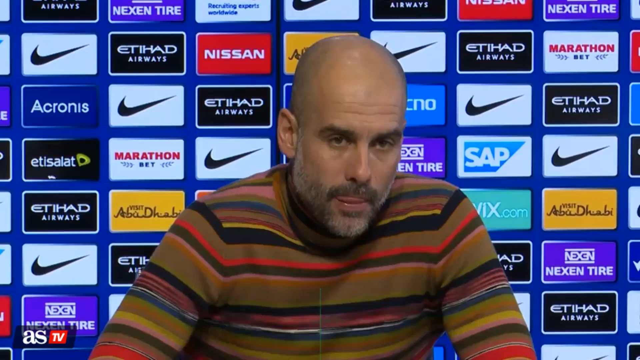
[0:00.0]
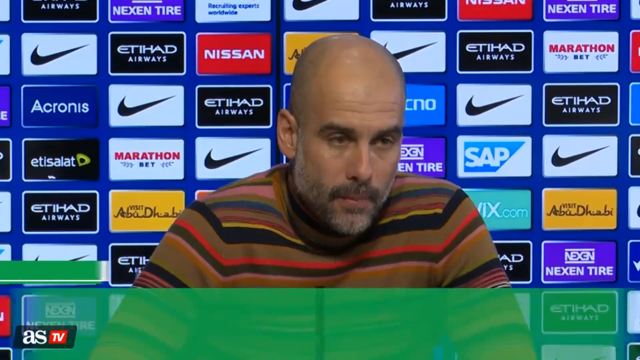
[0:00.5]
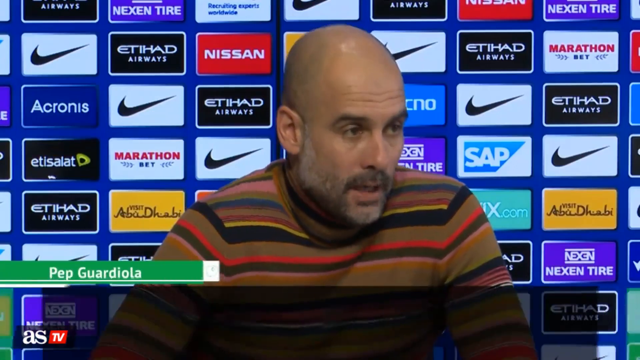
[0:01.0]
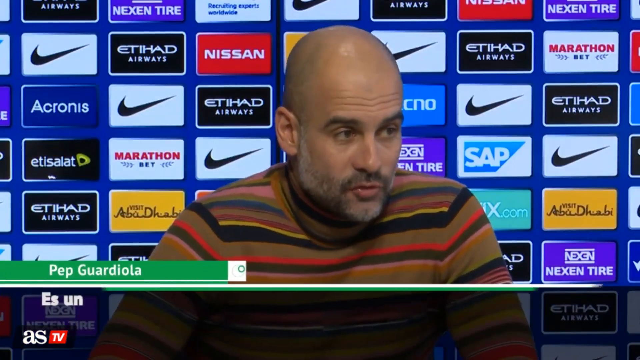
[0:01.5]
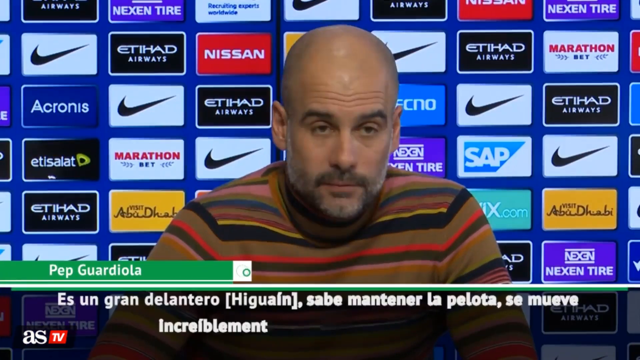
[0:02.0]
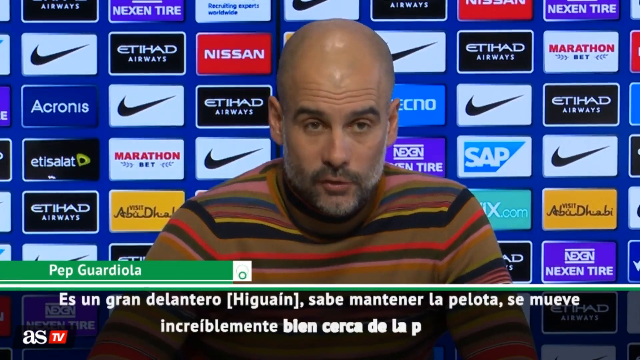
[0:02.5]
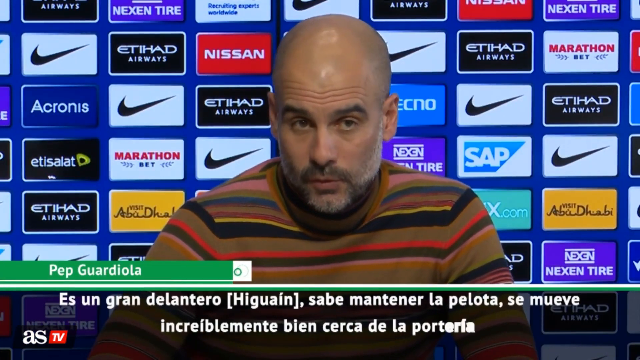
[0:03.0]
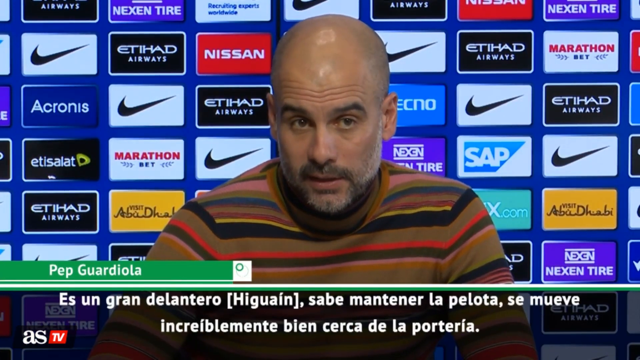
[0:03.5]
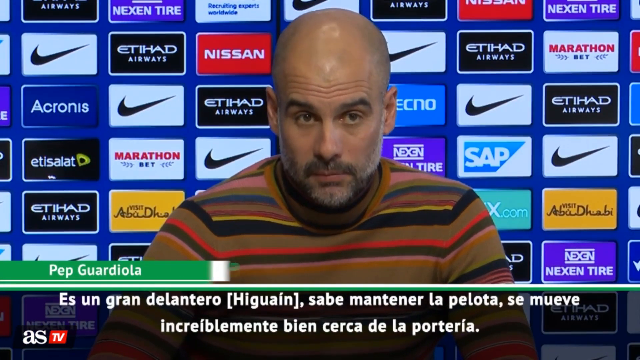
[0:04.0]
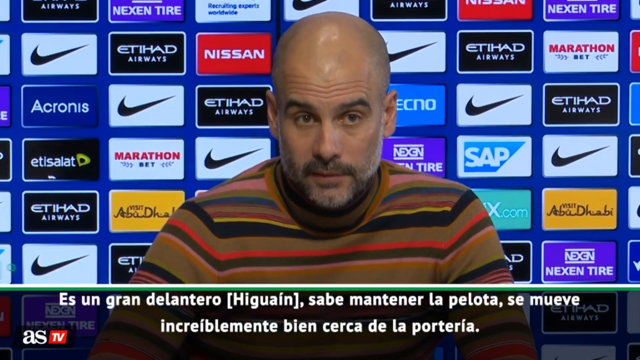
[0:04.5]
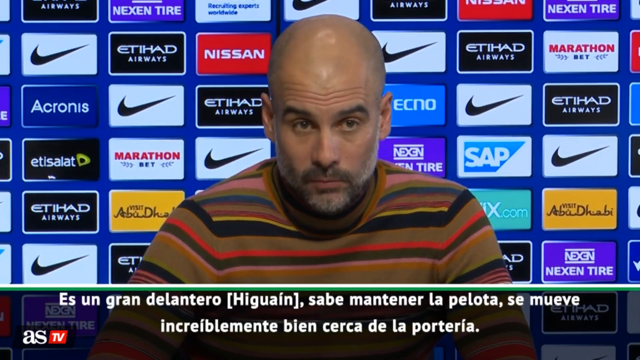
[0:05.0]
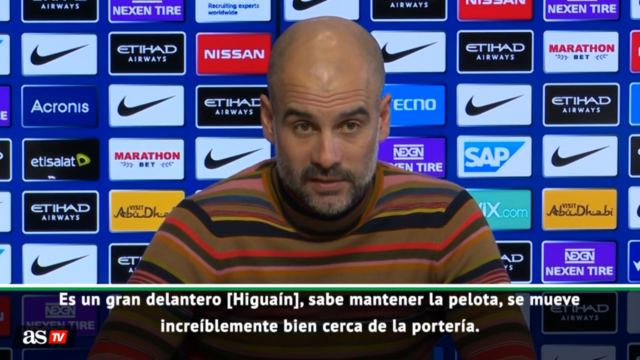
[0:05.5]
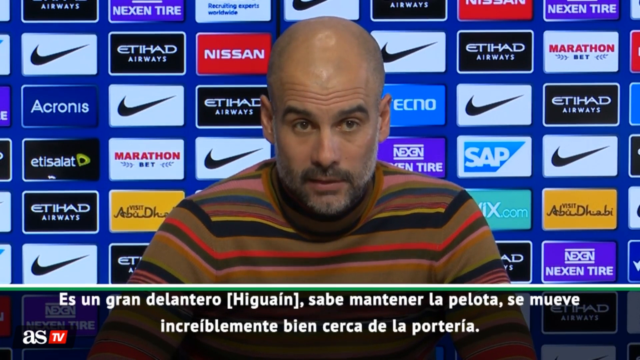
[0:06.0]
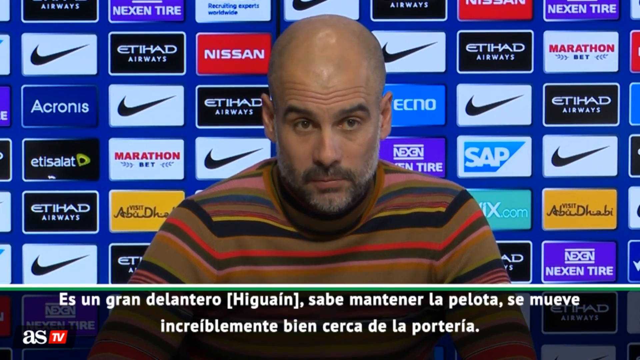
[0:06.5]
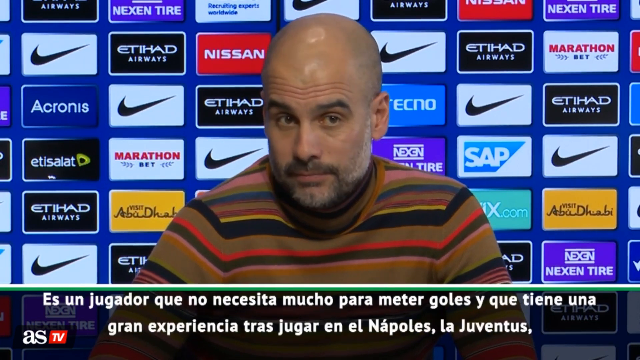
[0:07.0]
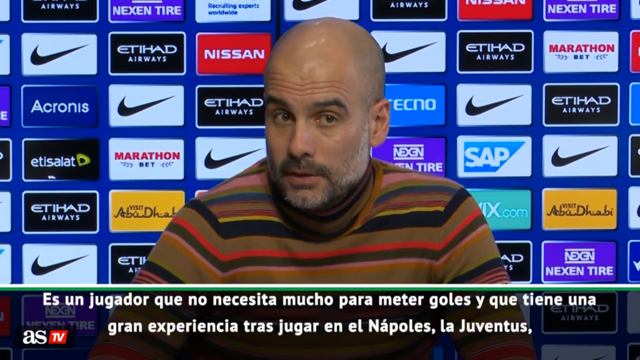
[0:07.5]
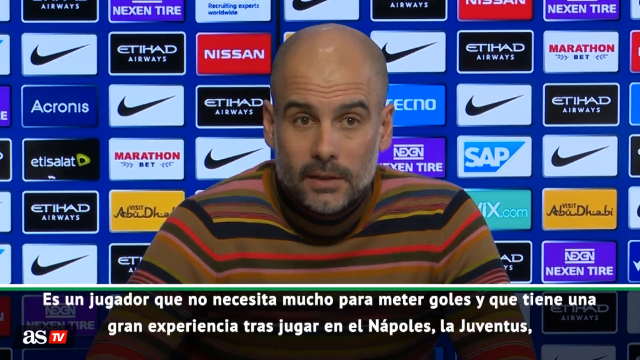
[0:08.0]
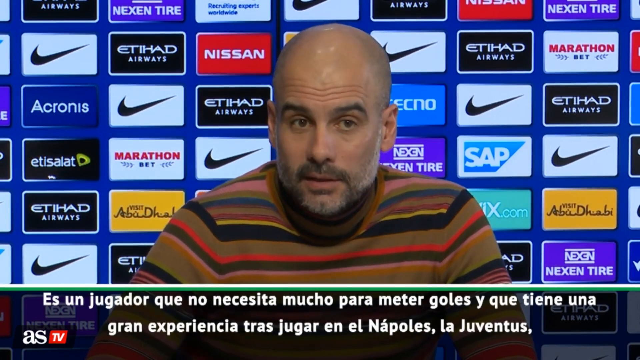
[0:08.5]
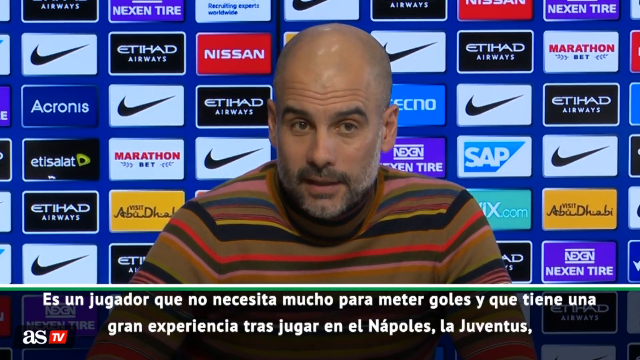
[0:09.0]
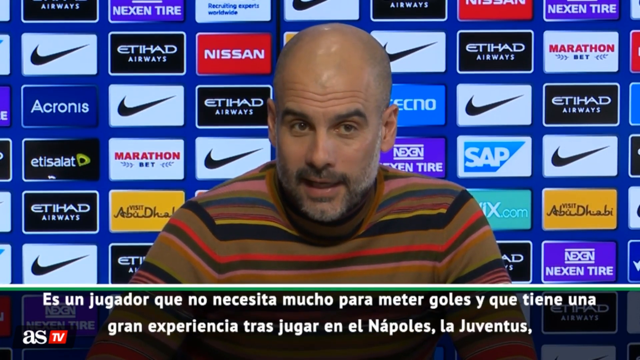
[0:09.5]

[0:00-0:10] A man sits in front of a bunch of logos, or sponsors, including Nike, SAP, Marathon, E-T-I-S-A-L-A-T, Acronis, Etihad and Nissan. He is bald, has a goatee, and looks like Nikita Kolof, a former pro wrestler. His shirt looks almost like it is from the 70s, an old-style shirt with all kinds of colors: red, black, green, yellow and blue. More logos appear, including Nexen Tire. The man, Pep Guardiola, speaks to the camera. The on-screen writing is in a different language, possibly Mexican, though this is not certain.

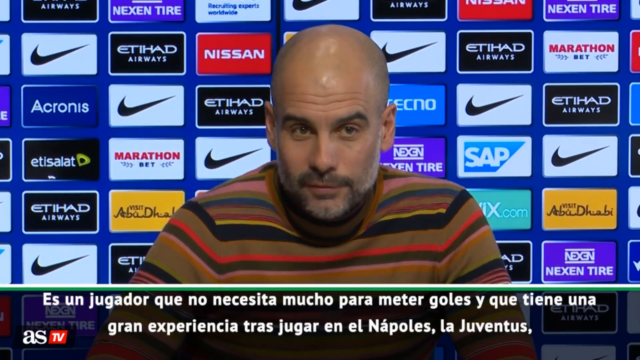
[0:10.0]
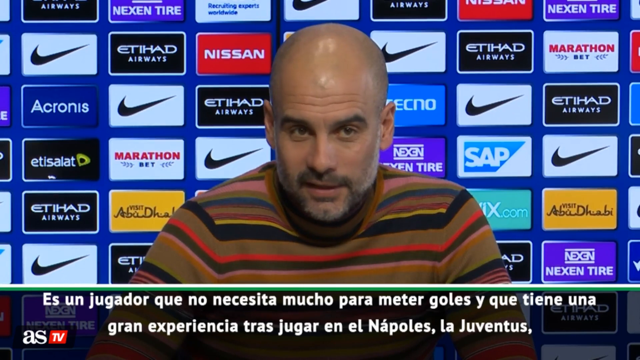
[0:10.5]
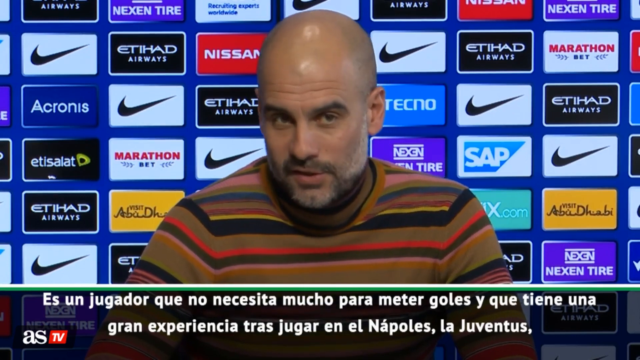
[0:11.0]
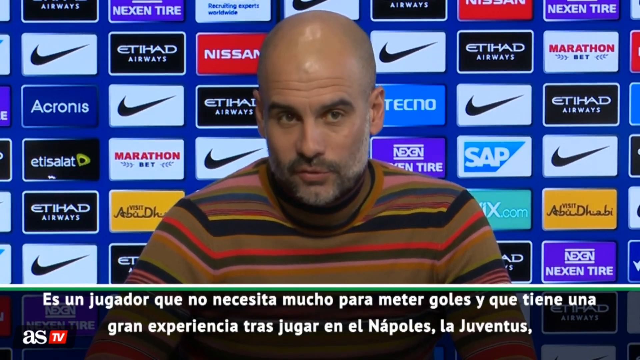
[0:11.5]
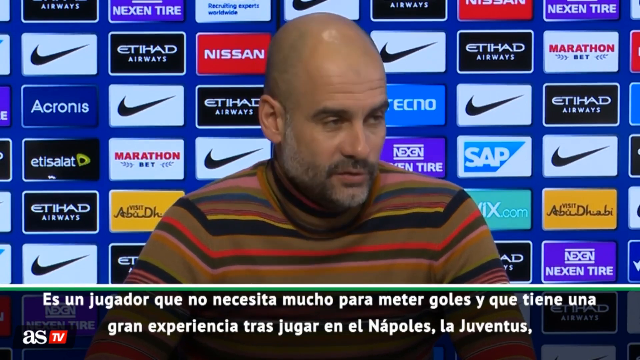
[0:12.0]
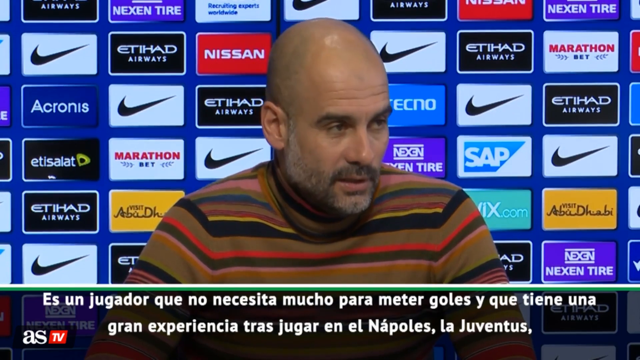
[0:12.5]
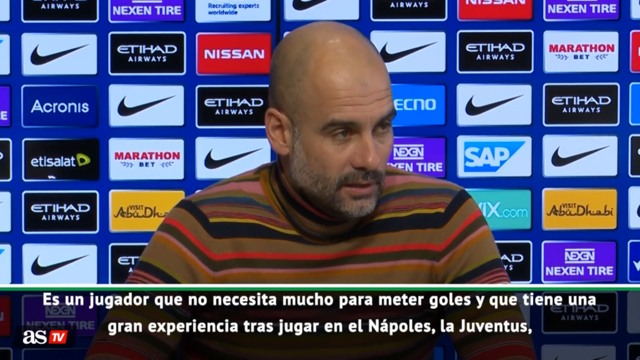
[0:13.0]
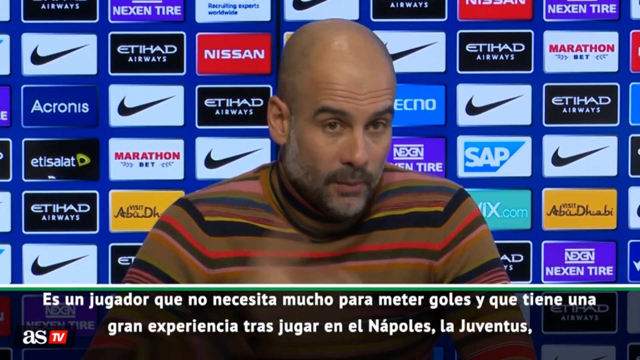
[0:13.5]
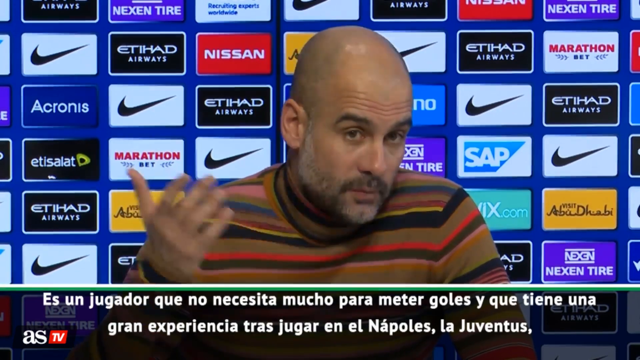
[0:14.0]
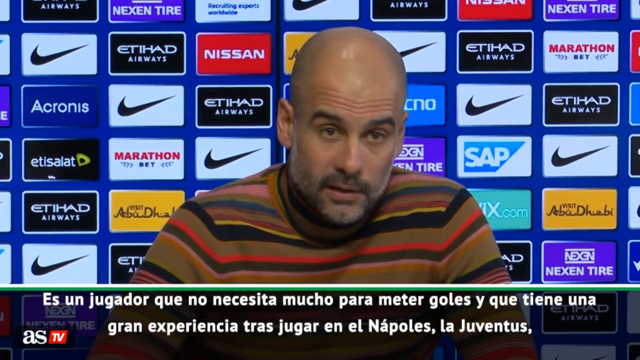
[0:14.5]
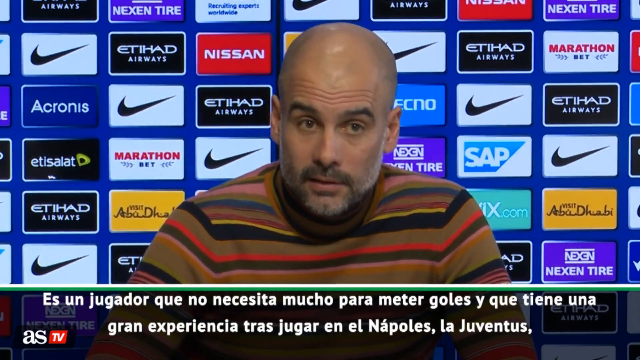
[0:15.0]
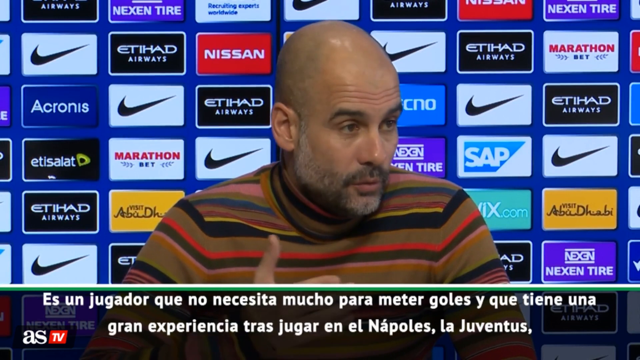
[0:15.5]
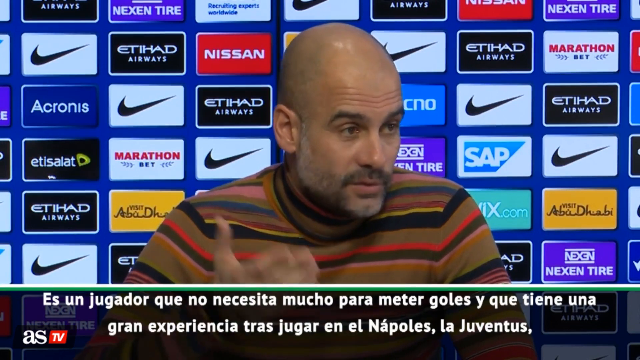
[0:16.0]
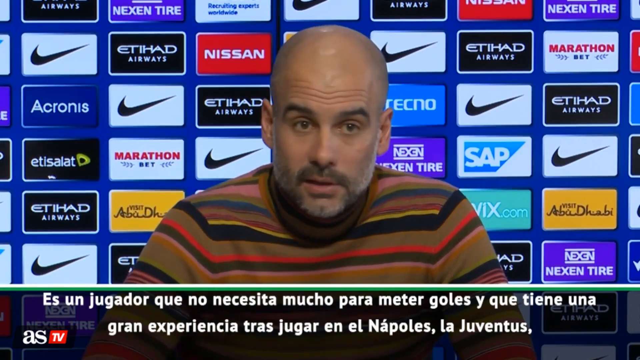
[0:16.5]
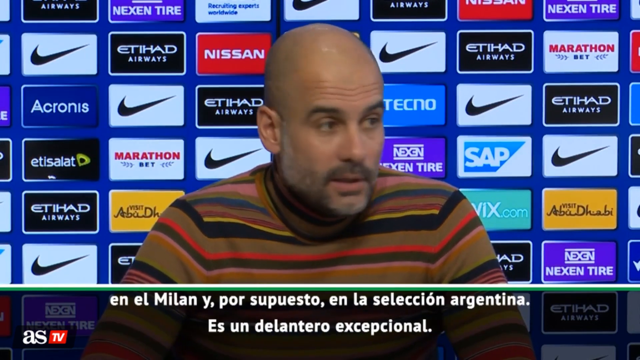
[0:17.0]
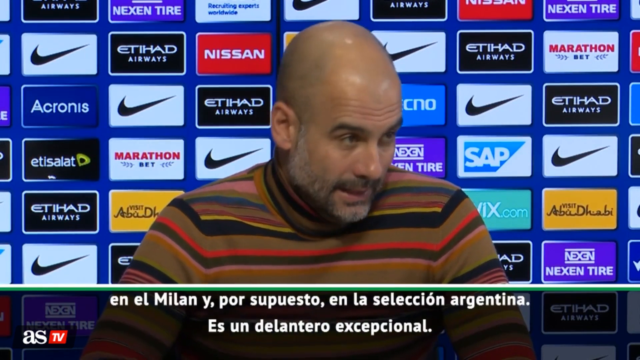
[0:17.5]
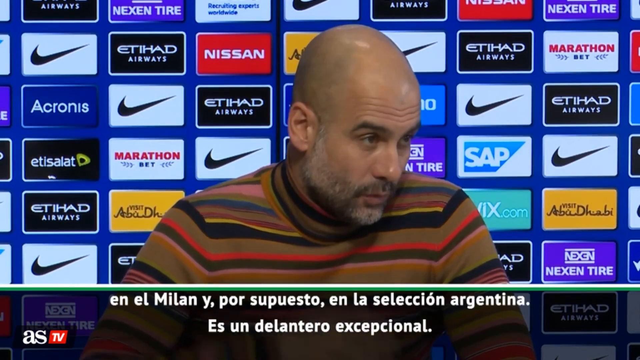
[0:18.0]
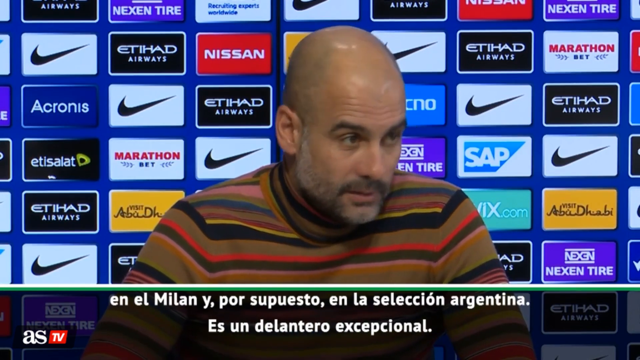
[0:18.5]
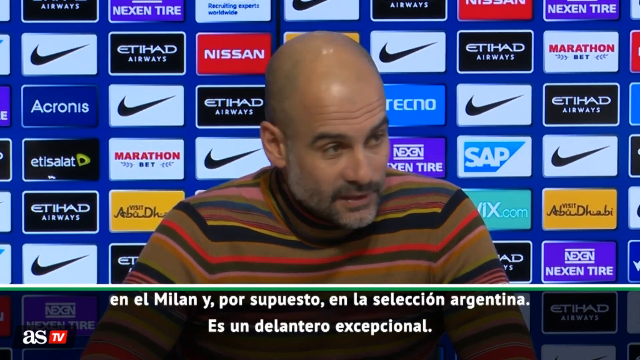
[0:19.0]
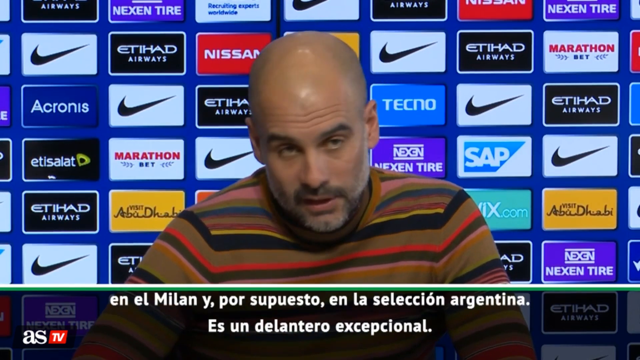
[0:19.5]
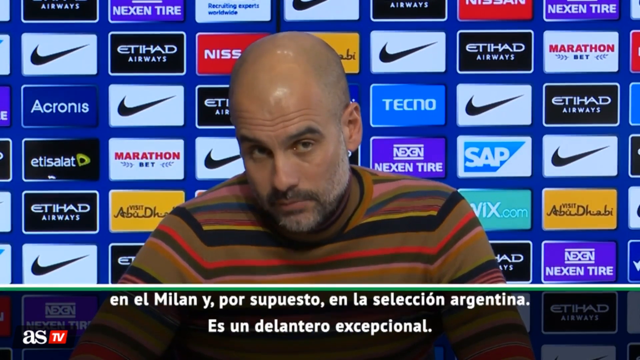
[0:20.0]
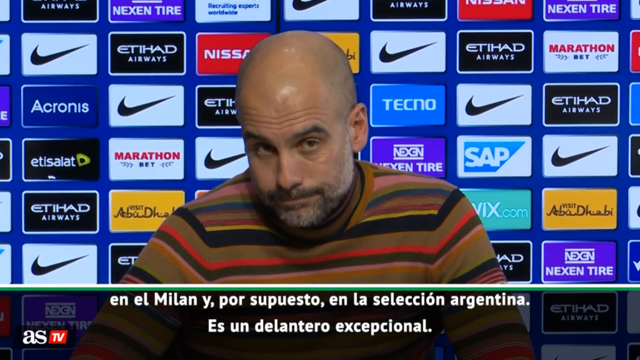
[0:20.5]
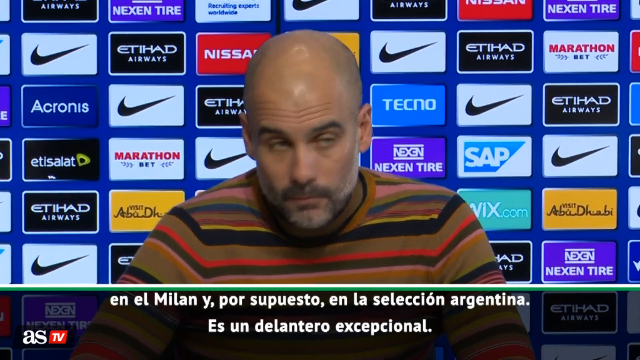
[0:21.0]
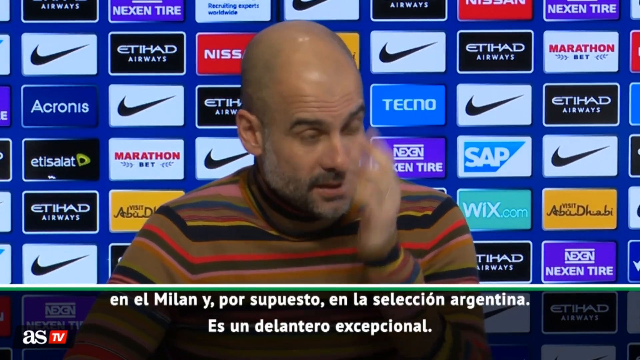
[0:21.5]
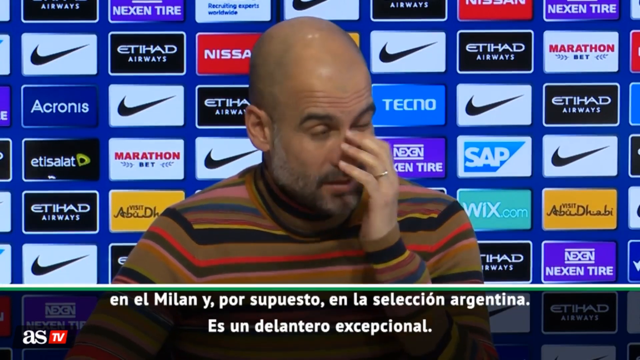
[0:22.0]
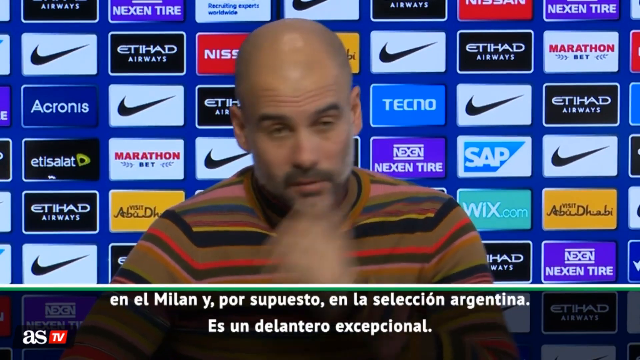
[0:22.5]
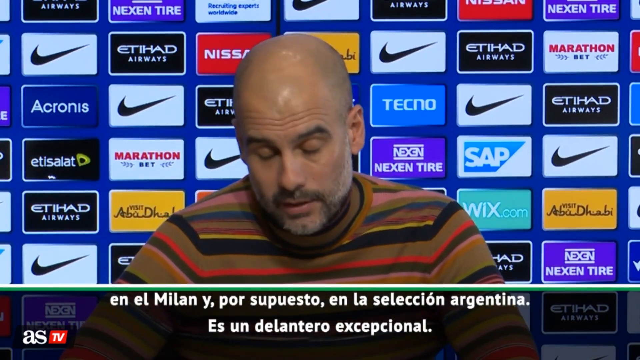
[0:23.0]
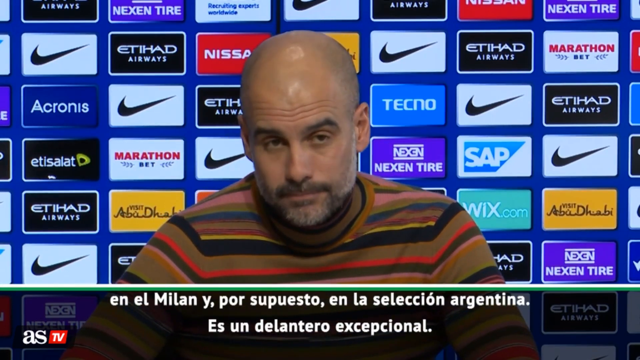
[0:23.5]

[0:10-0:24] The interview video continues with the man in a 1970s-style shirt with horizontal stripes, with red, green, black, yellow, blue and pink all over it. He has a goatee and looks like a pro wrestler named Nikita Koloff. Behind him is a bunch of sponsors of the marathon: Nike, SAP, Nexen, Nexentire, Etihad (E-T-I-H-A-D), Acronis (A-C-R-O-N-I-S) and Nissan. Another sponsor reads "Wix.com". He is answering questions or just speaking to the camera in some type of interview. Text at the bottom, maybe a translation, is in a different language.